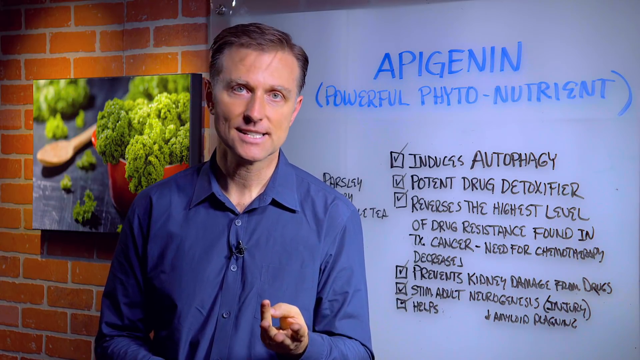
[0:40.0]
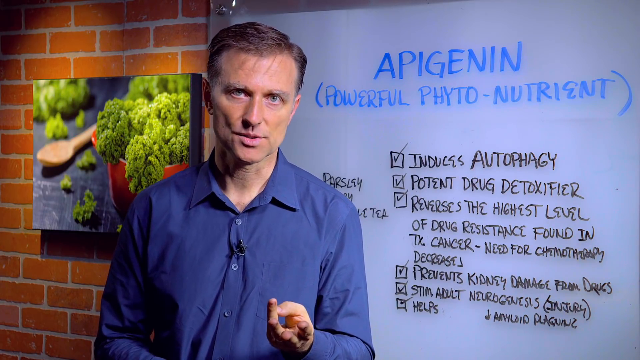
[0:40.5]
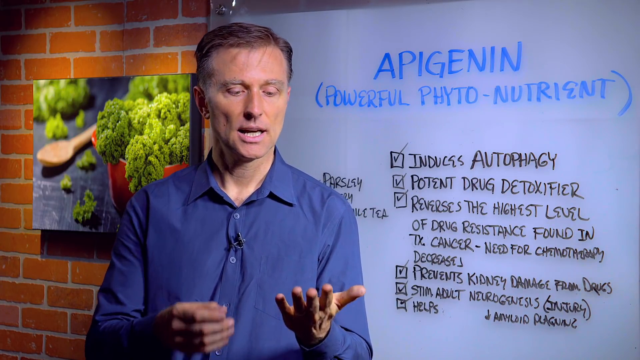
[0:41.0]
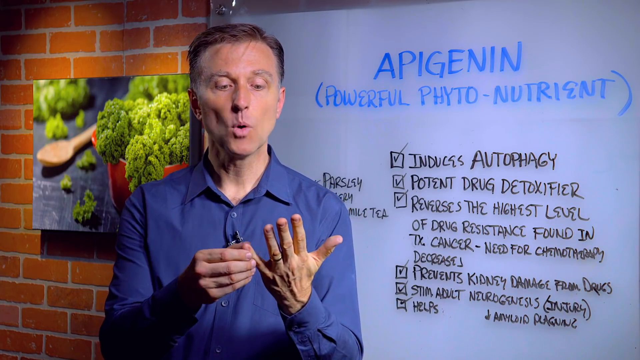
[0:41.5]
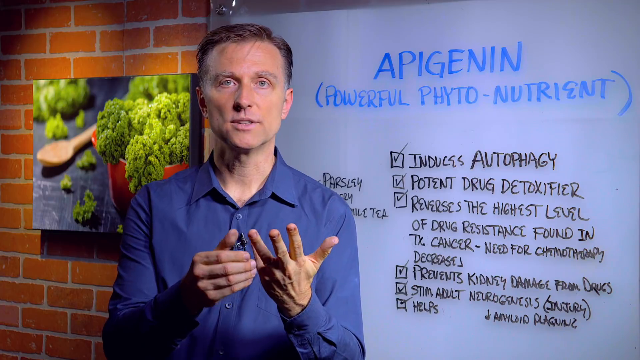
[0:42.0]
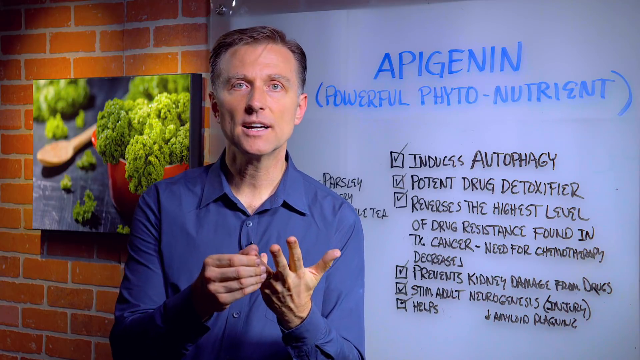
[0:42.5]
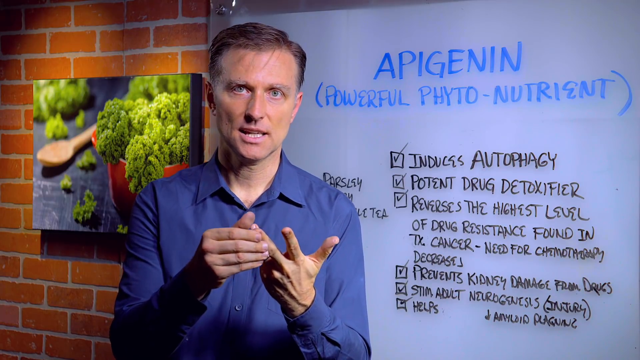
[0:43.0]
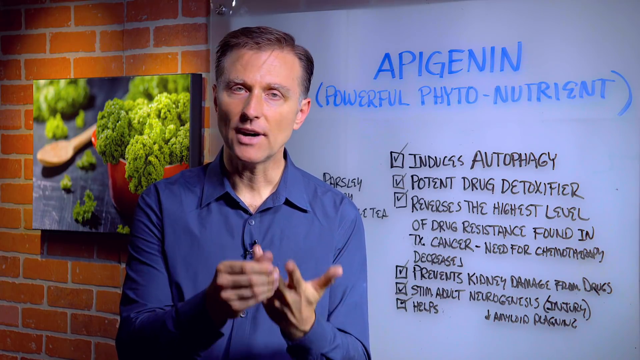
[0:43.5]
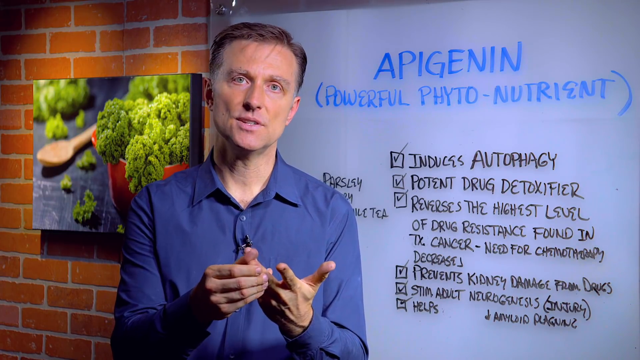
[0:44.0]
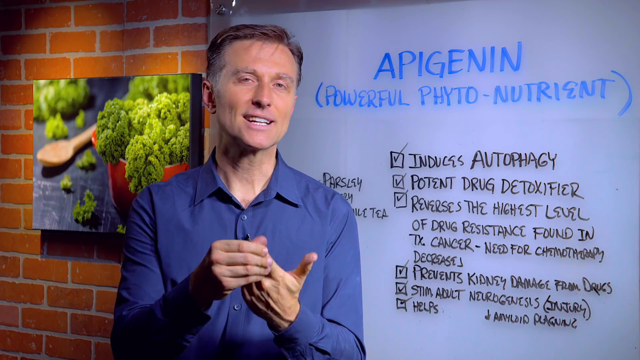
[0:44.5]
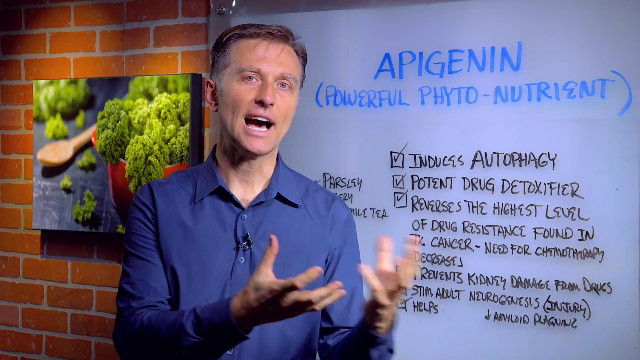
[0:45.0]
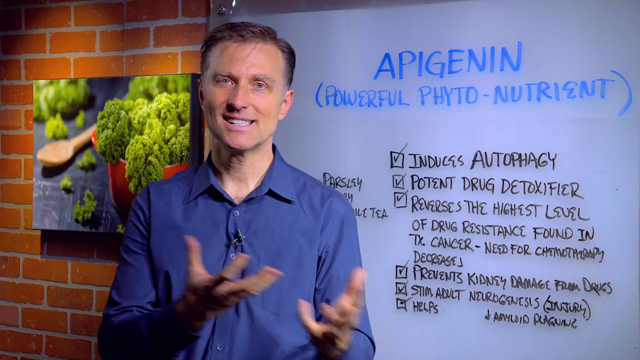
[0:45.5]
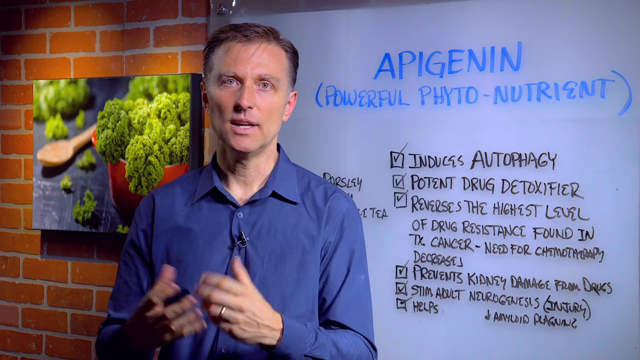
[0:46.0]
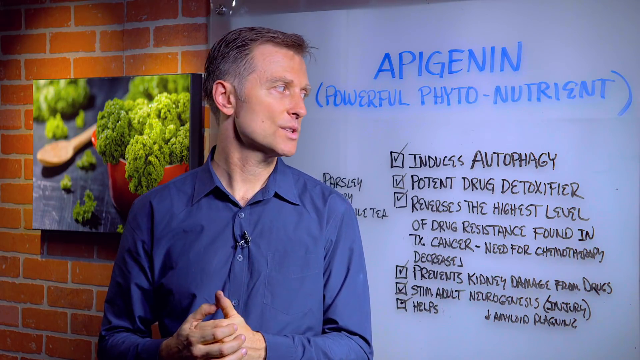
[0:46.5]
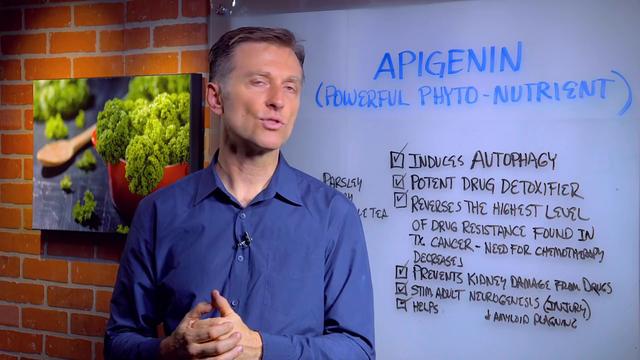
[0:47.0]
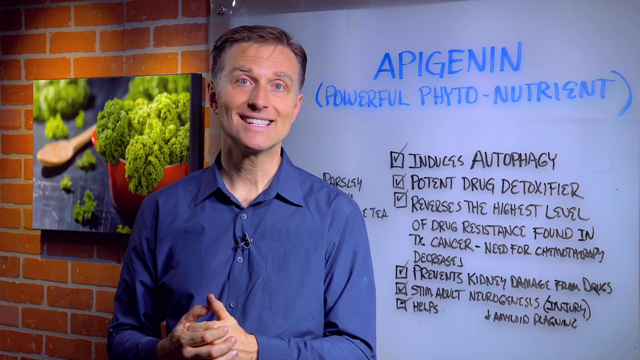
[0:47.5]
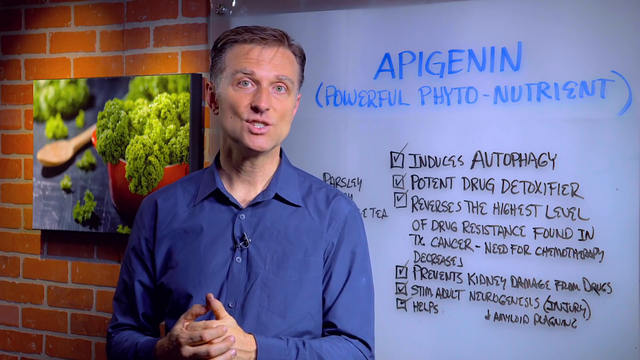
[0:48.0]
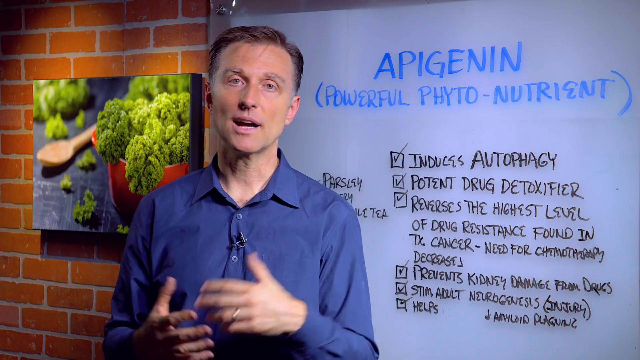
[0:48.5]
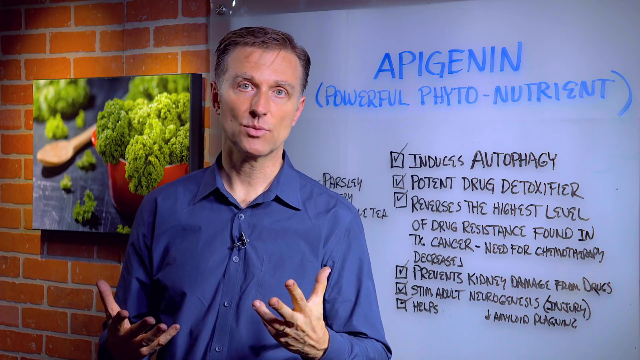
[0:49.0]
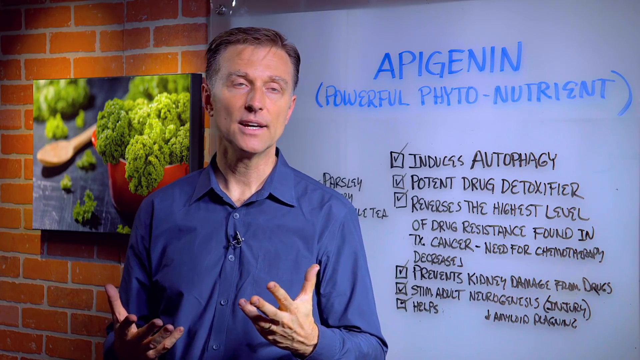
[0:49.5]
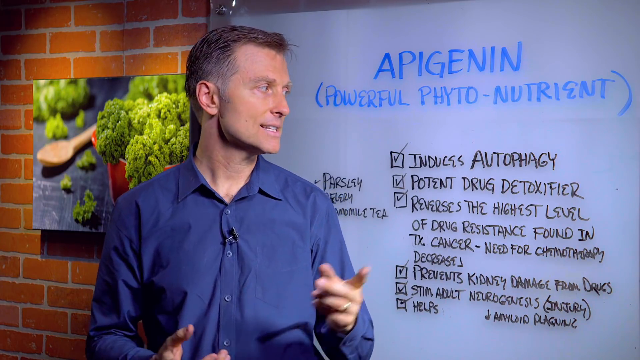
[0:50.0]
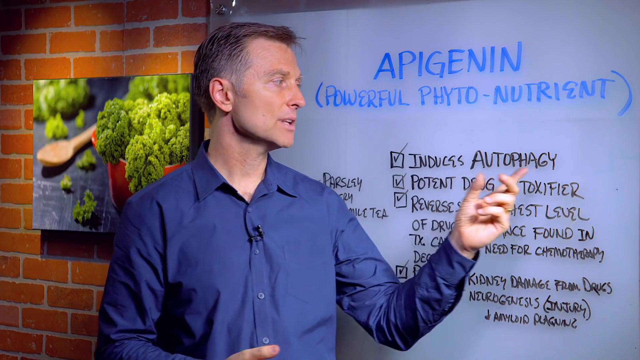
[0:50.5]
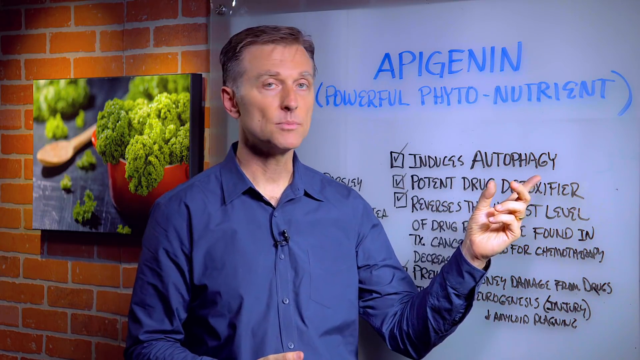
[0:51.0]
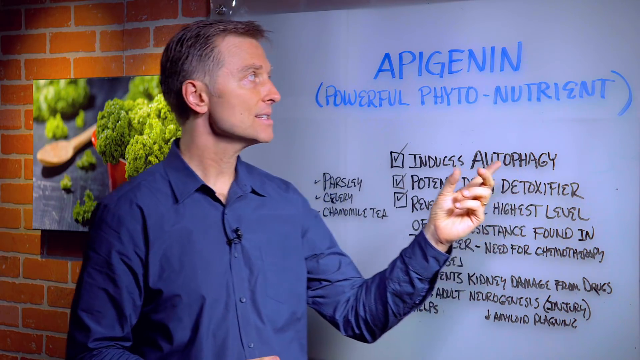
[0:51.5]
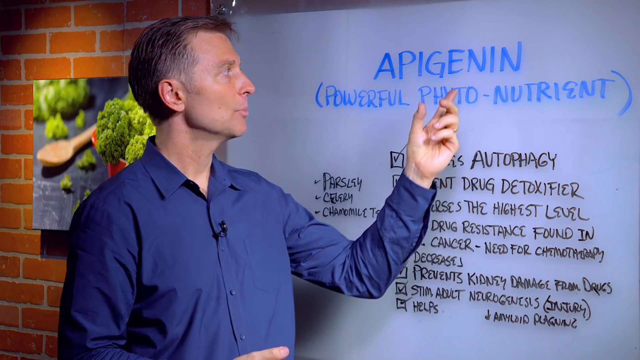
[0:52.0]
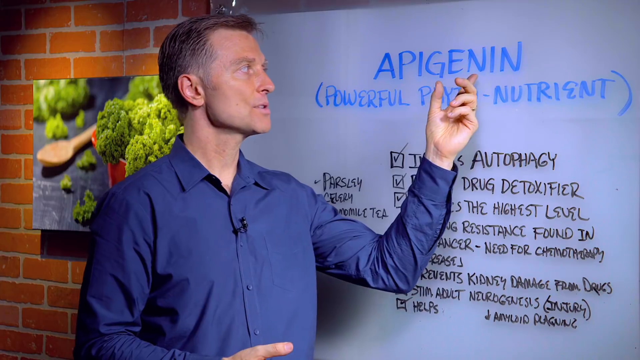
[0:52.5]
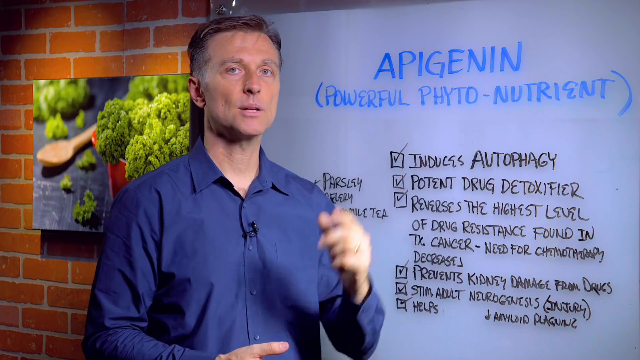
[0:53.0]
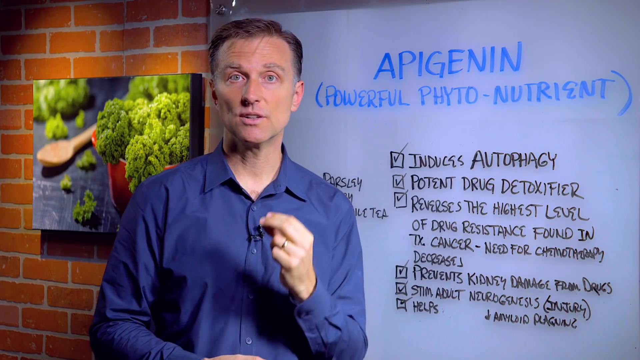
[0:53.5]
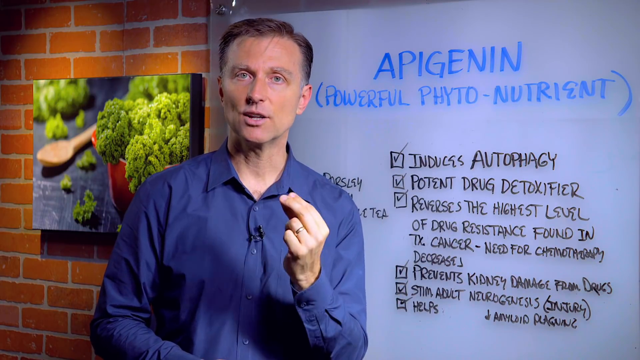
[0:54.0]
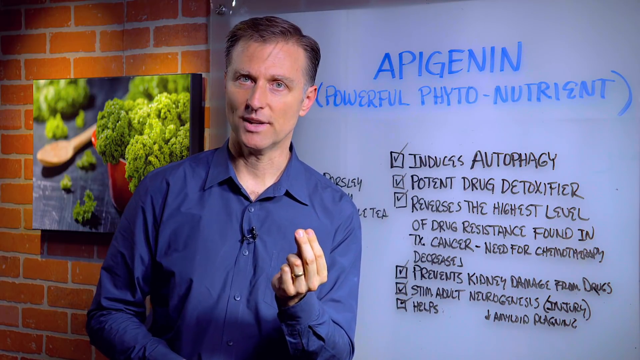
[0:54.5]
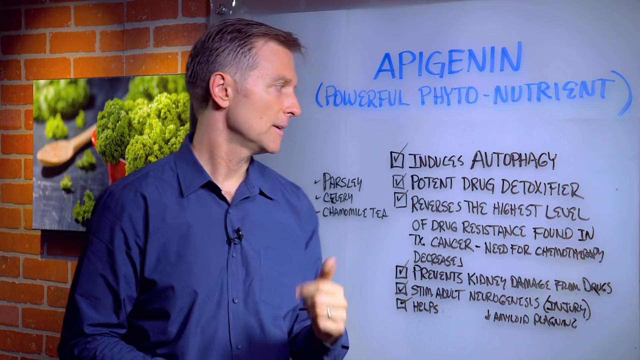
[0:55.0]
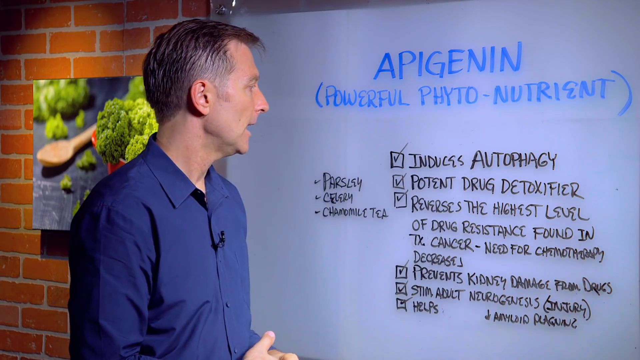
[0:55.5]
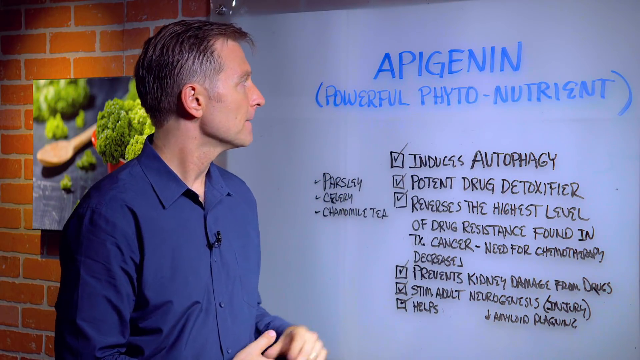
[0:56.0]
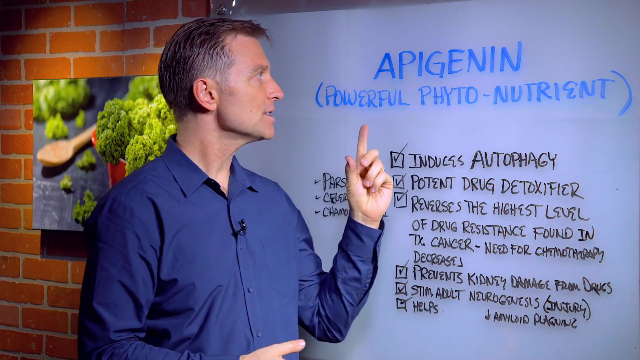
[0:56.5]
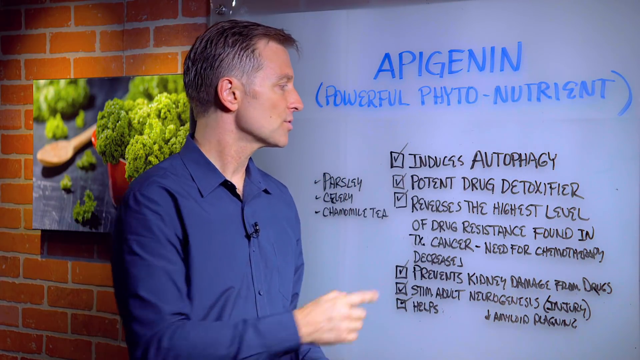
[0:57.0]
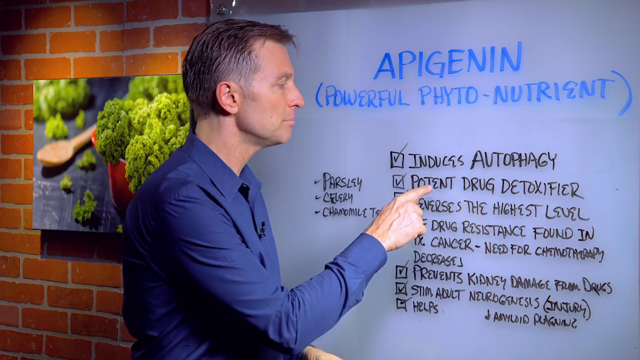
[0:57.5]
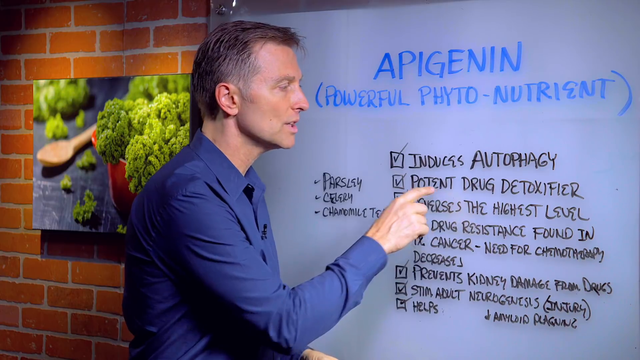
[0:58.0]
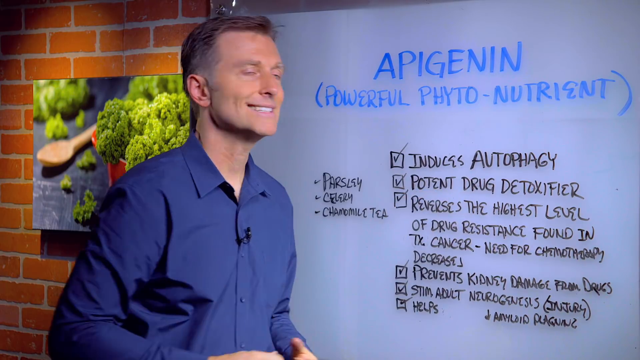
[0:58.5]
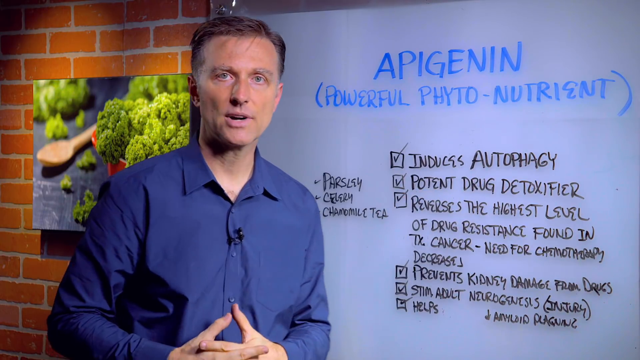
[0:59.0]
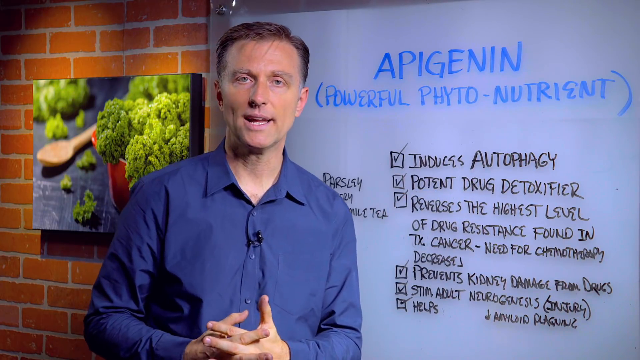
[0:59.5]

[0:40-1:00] The man counts off points on his fingers, using his right hand to count on his left hand, starting with the pinky and moving to the middle finger. He wears a gold wedding band on his left hand. He keeps talking to the viewer and pointing at the whiteboard, where six points are checked off. With his left hand he points up to the words in blue, "apigenin, the powerful phytonutrient", then to the points below, which are all written in black. The very bright picture of a red bowl of broccoli with a wooden spoon next to it is still visible on the brick wall.